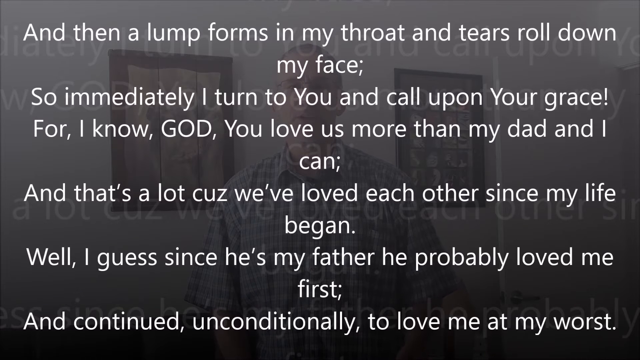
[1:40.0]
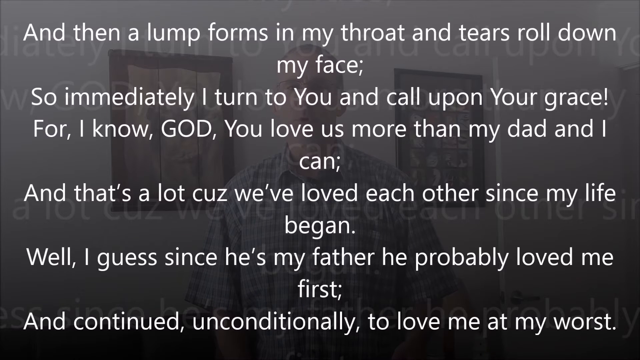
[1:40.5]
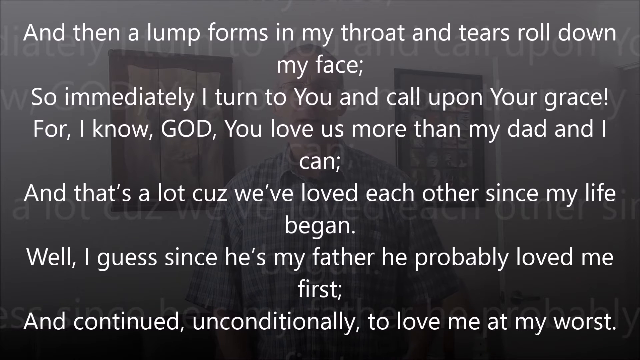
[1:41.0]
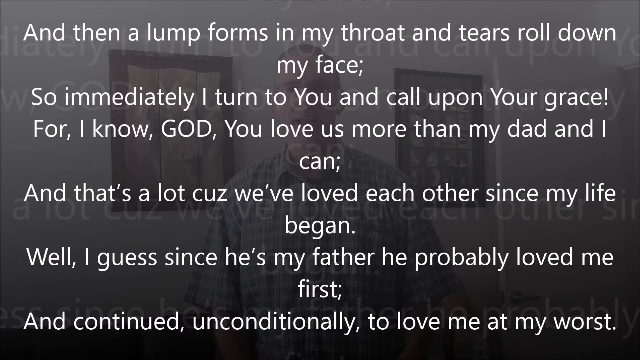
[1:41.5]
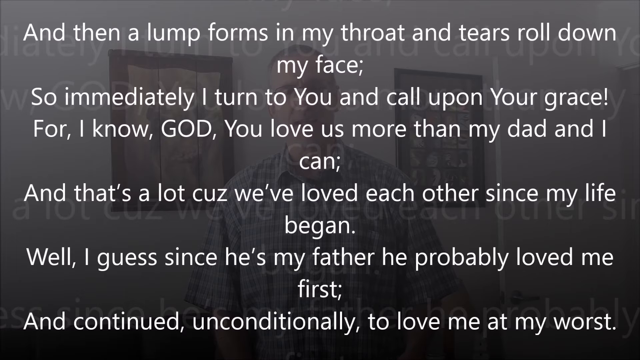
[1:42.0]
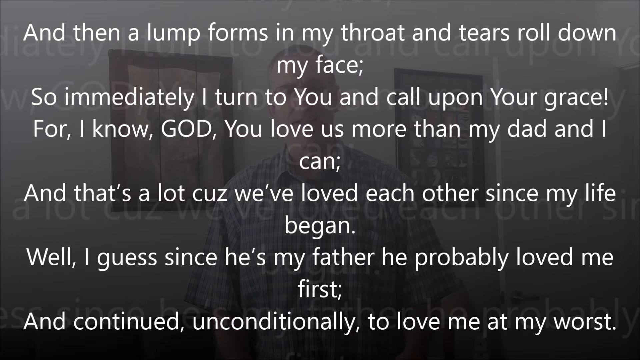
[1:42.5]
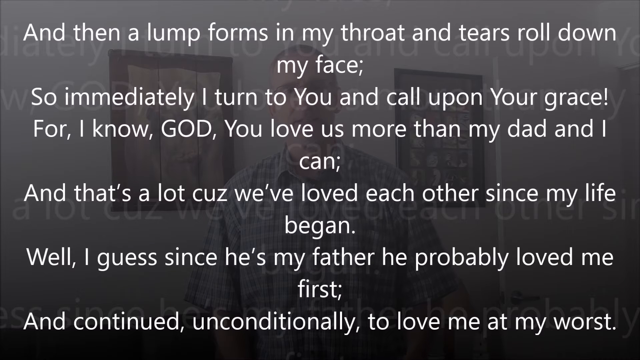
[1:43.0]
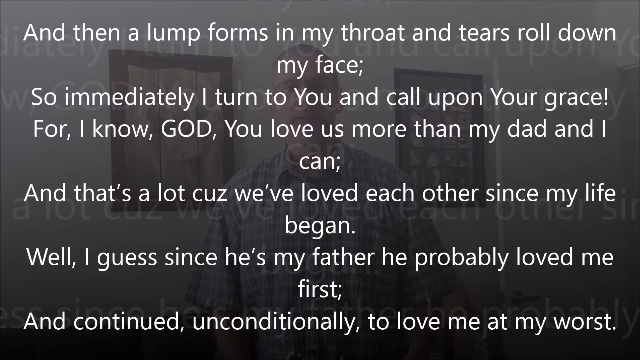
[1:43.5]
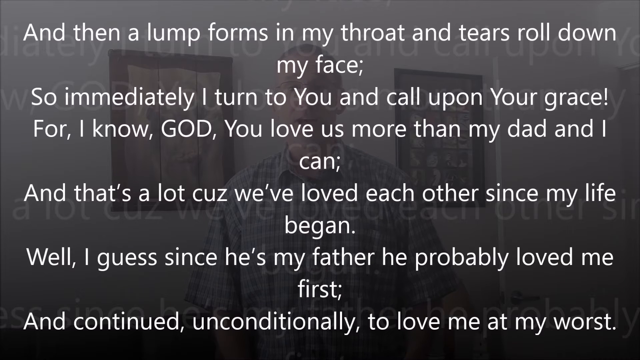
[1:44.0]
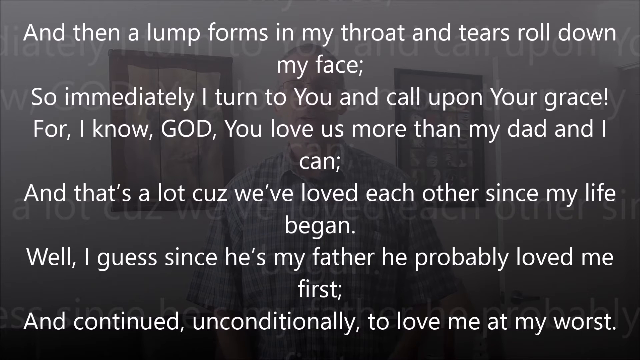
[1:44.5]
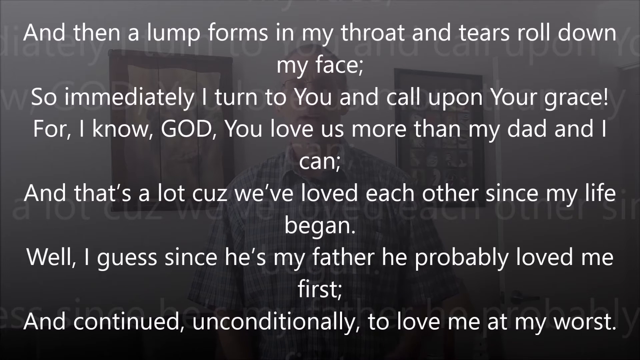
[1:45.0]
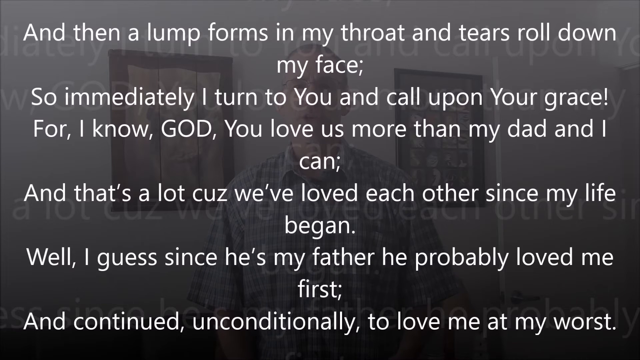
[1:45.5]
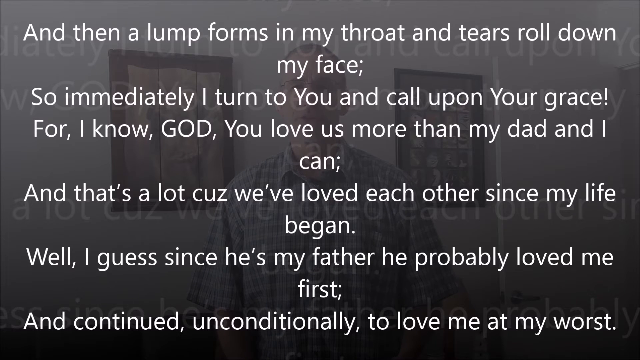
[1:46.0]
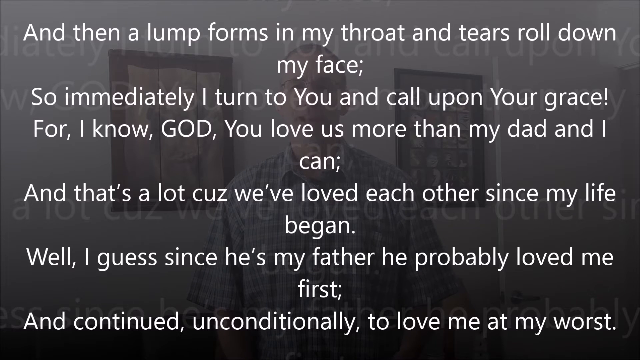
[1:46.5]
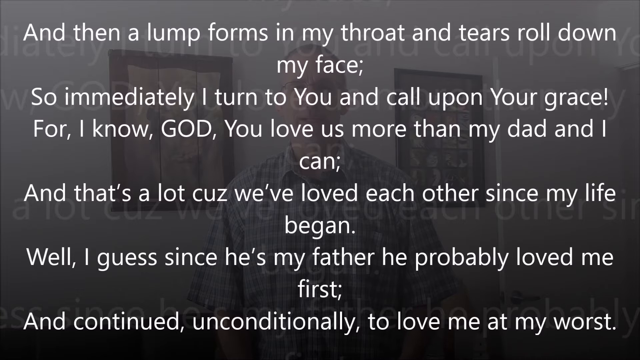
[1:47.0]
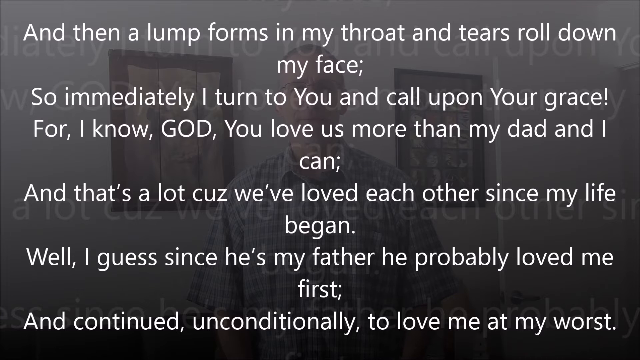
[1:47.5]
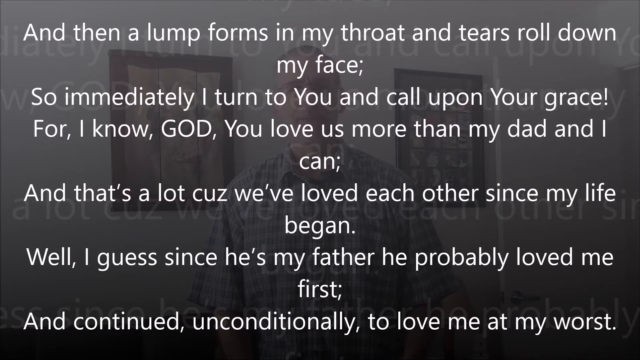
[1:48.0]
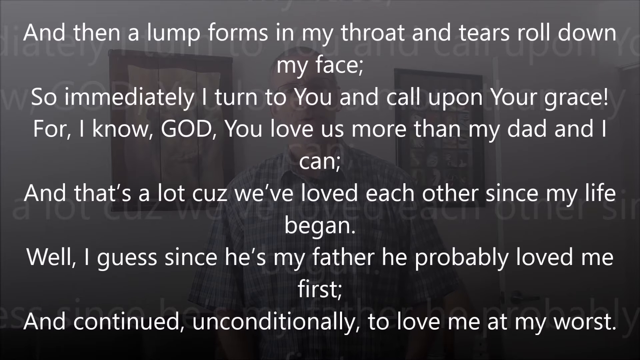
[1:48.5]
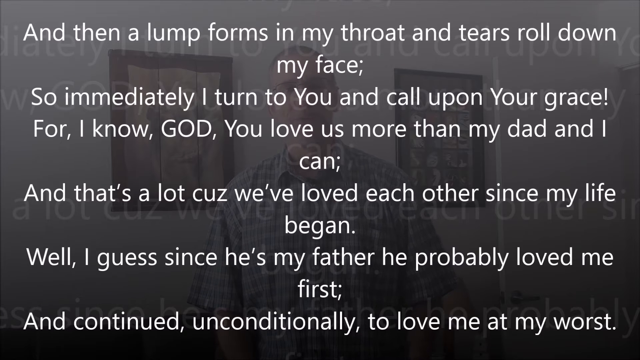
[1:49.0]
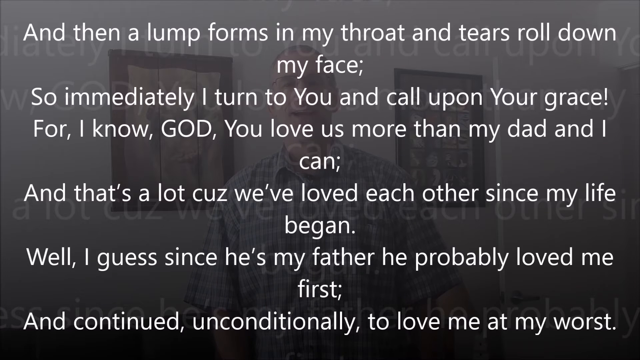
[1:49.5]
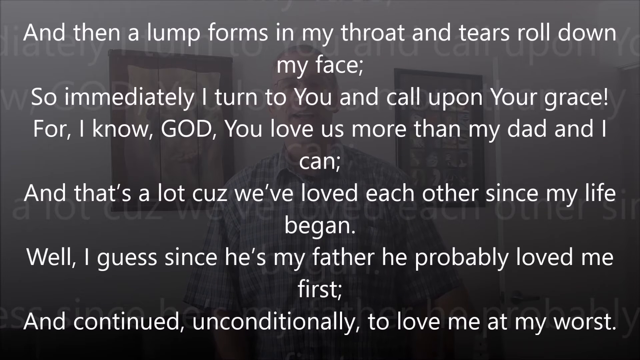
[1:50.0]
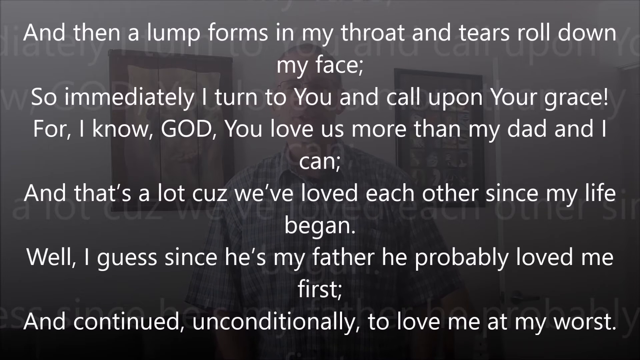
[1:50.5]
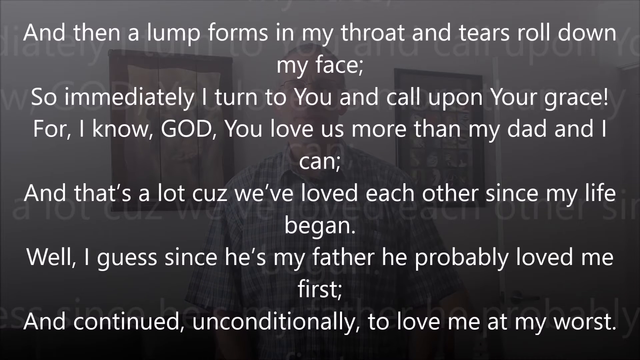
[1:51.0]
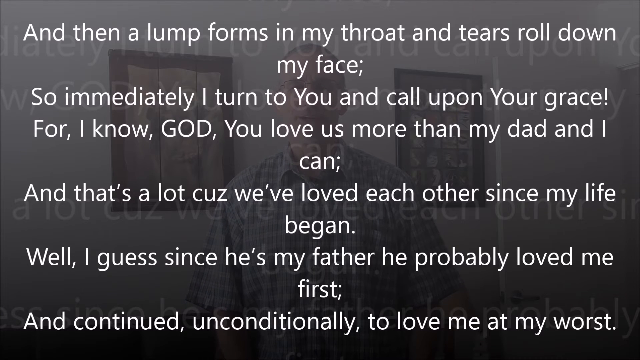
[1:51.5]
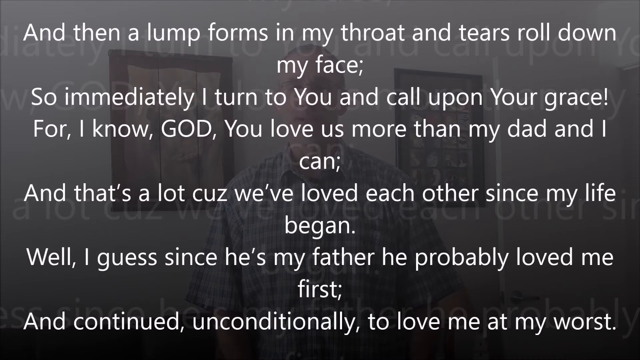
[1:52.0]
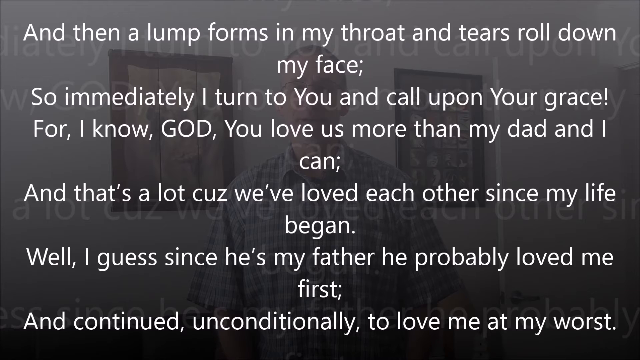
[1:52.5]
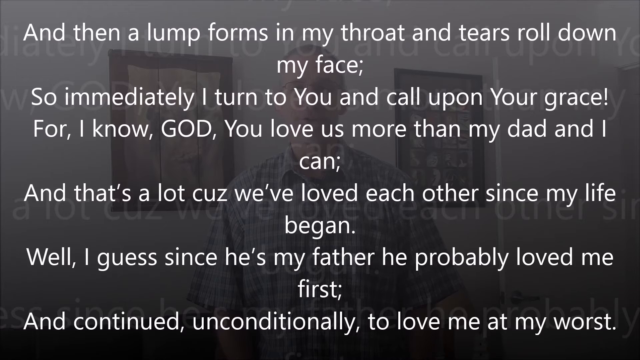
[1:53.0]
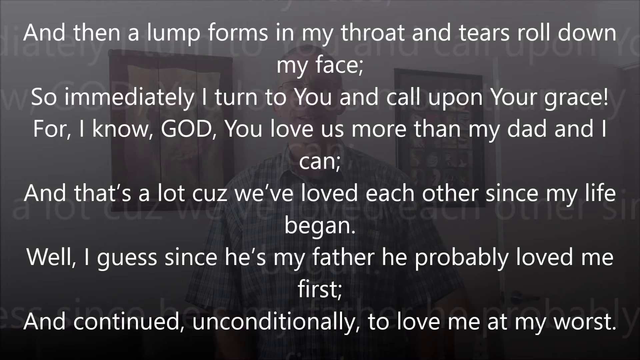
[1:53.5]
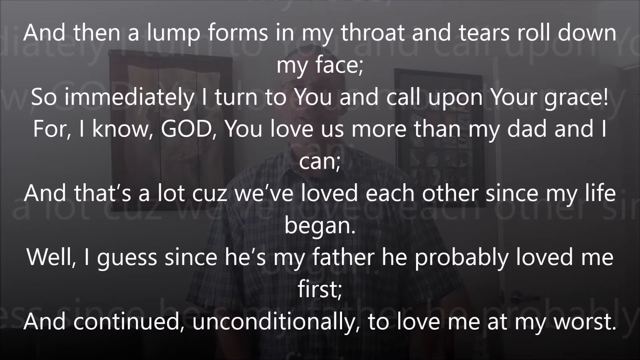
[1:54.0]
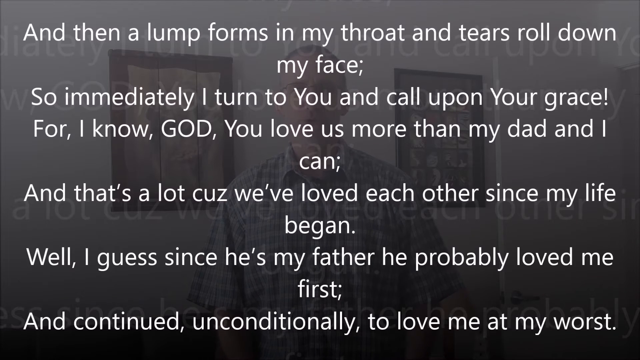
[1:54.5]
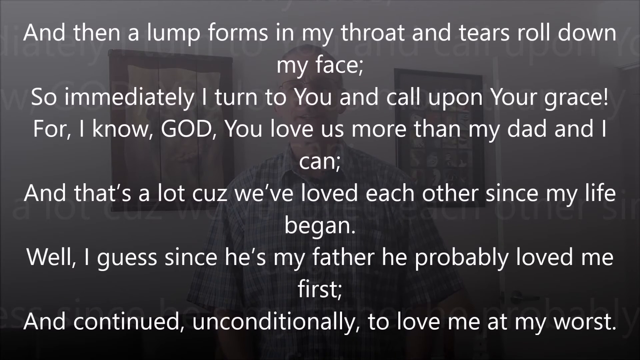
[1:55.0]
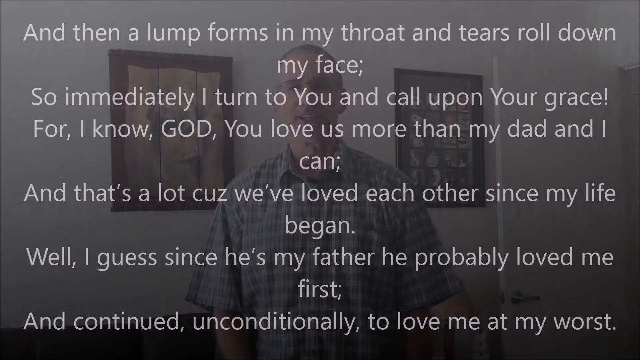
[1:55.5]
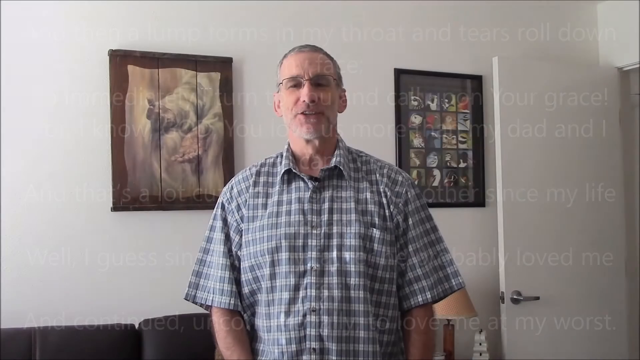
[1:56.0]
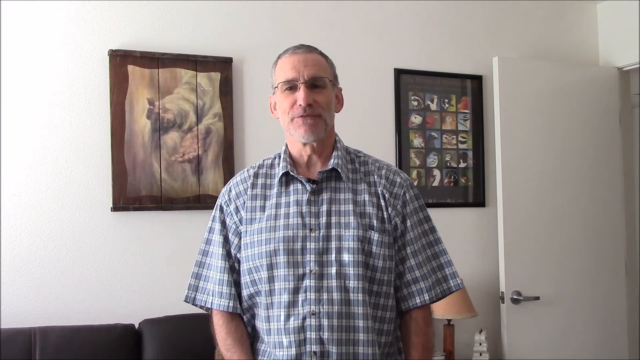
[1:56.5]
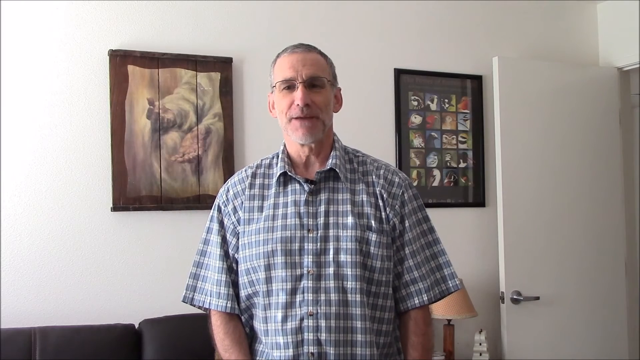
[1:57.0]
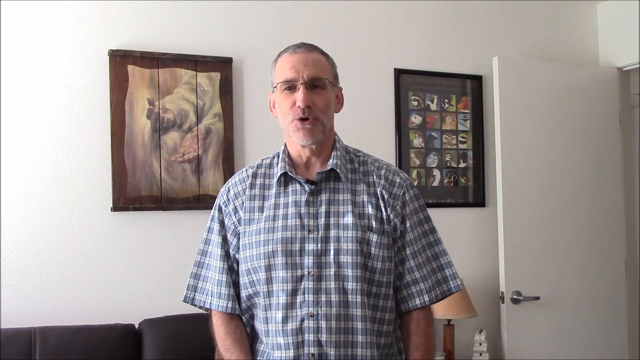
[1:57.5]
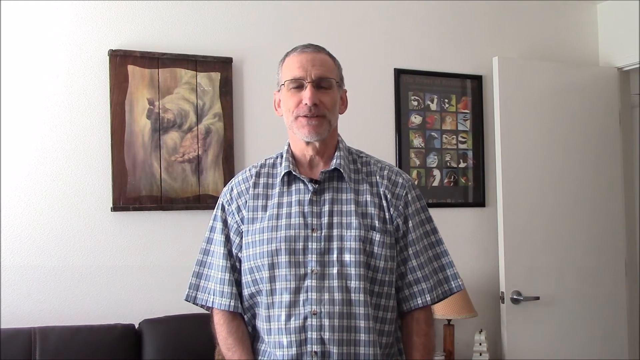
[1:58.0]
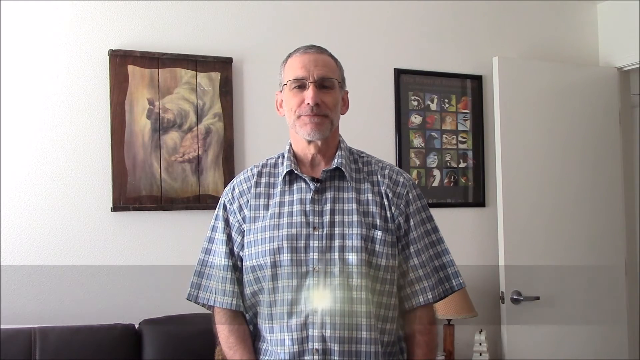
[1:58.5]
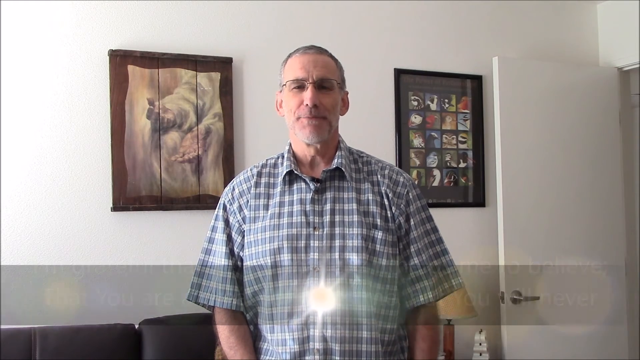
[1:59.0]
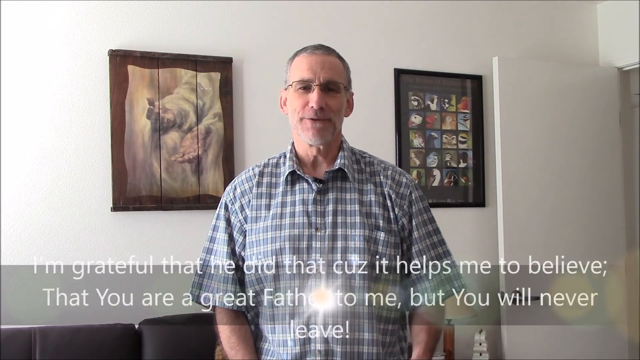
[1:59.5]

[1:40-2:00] The same poem in white font is zoomed in on the screen and remains there for roughly 17 seconds; the words then slowly zoom out as the video cuts back to the man in the gray and white plaid shirt standing in the room with white walls. He appears to be talking about the poem and has a very pleased look on his face, seeming very proud.